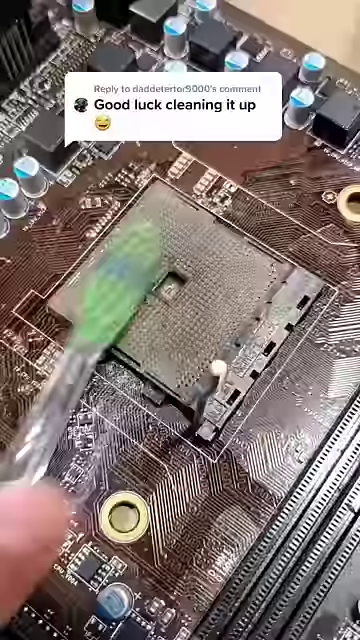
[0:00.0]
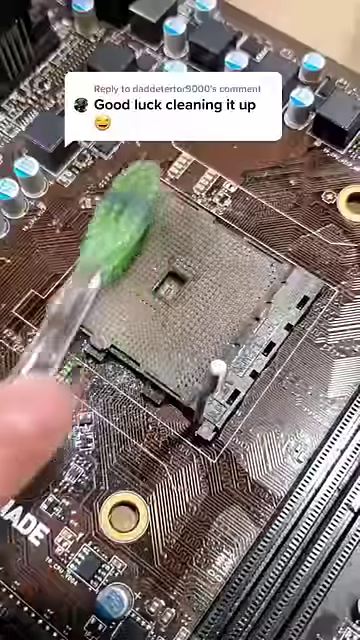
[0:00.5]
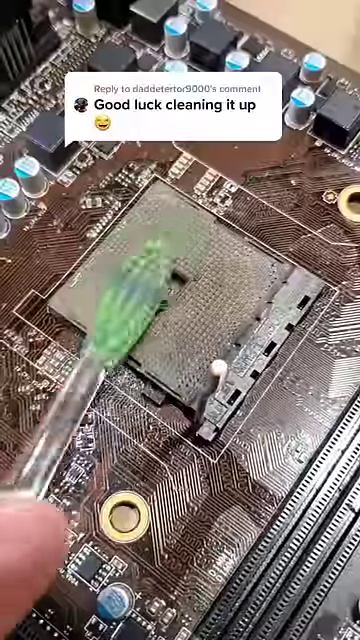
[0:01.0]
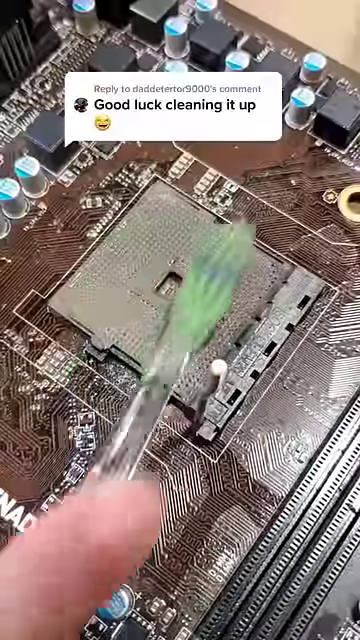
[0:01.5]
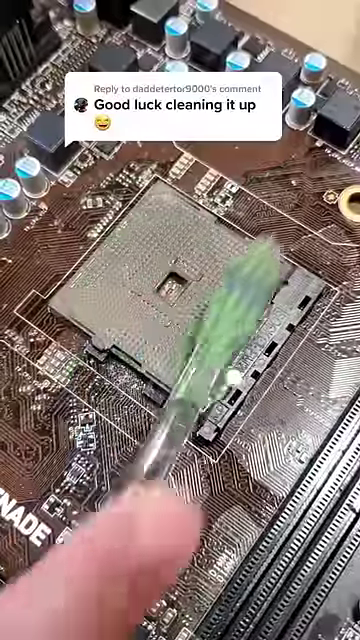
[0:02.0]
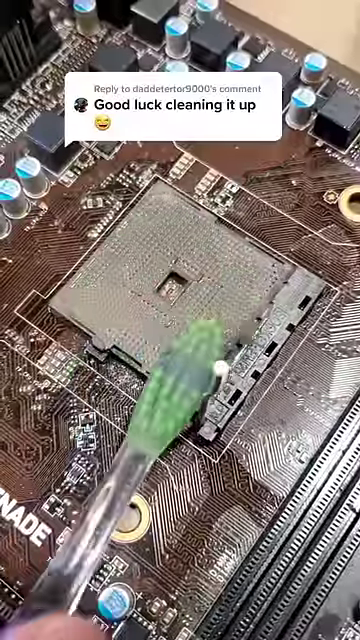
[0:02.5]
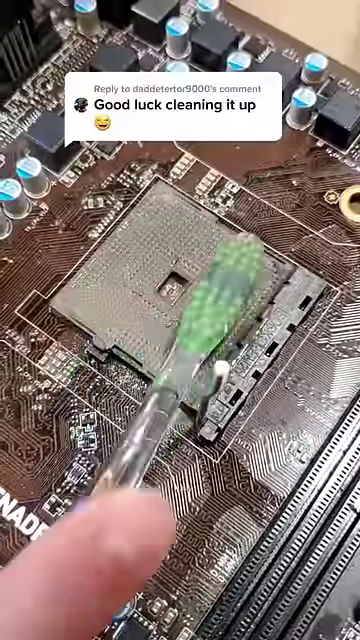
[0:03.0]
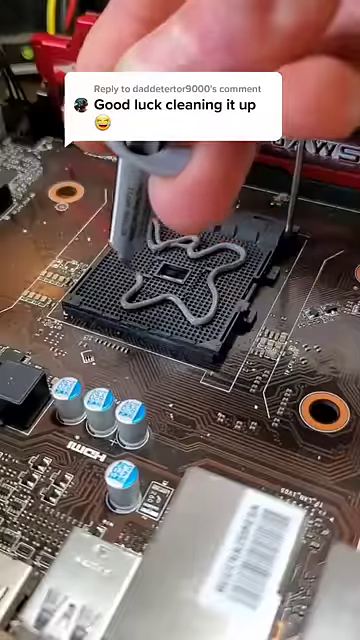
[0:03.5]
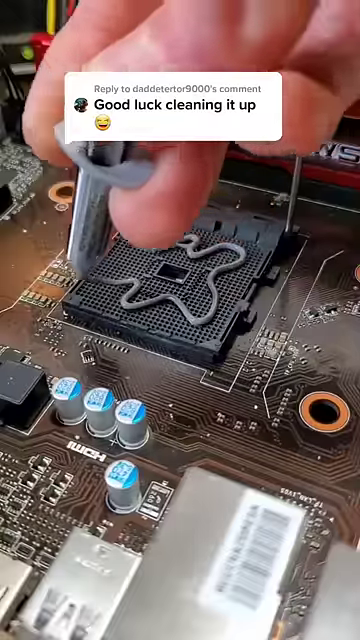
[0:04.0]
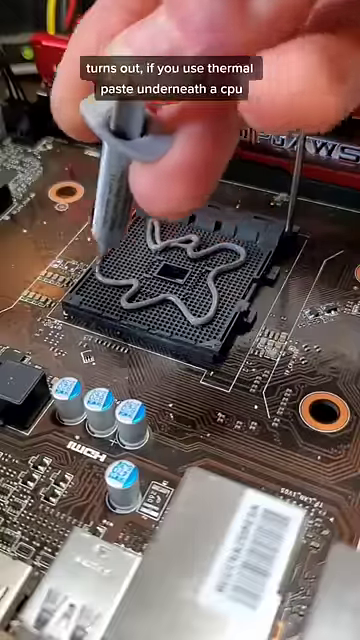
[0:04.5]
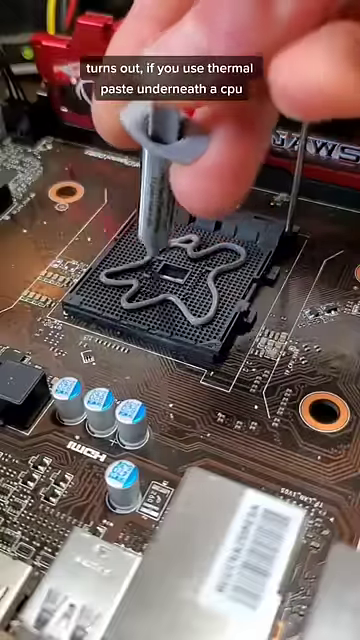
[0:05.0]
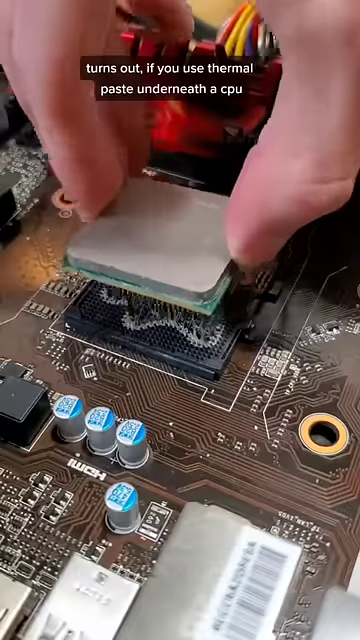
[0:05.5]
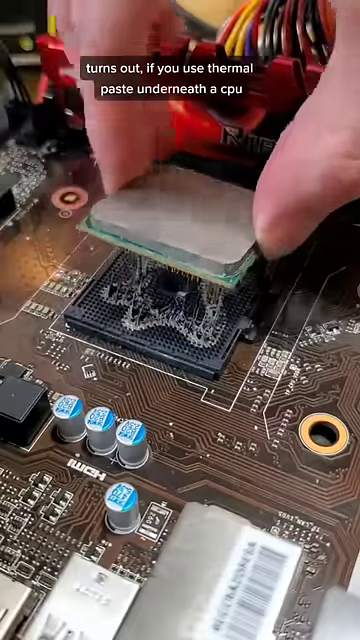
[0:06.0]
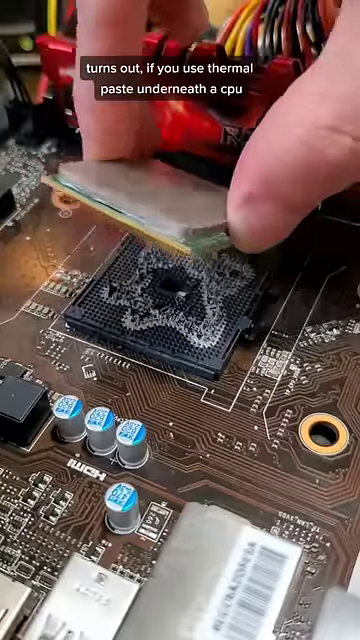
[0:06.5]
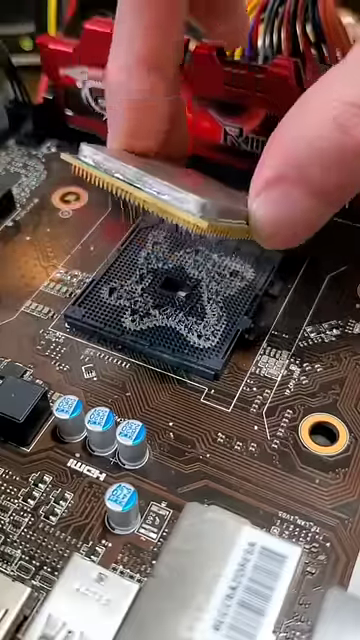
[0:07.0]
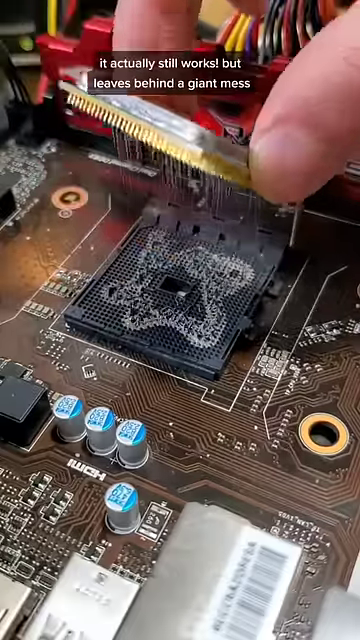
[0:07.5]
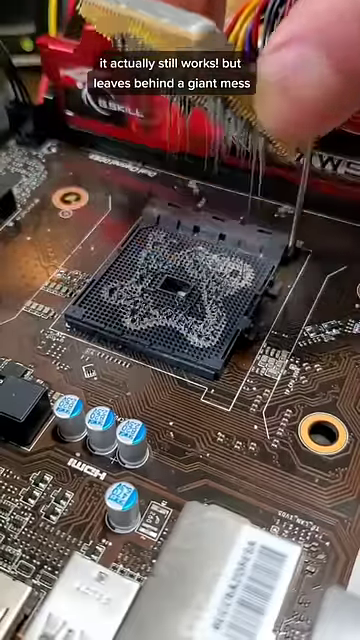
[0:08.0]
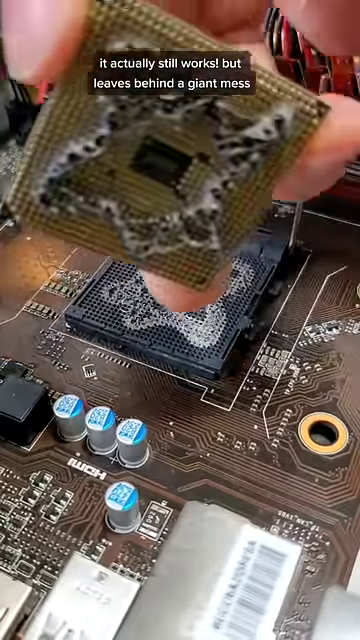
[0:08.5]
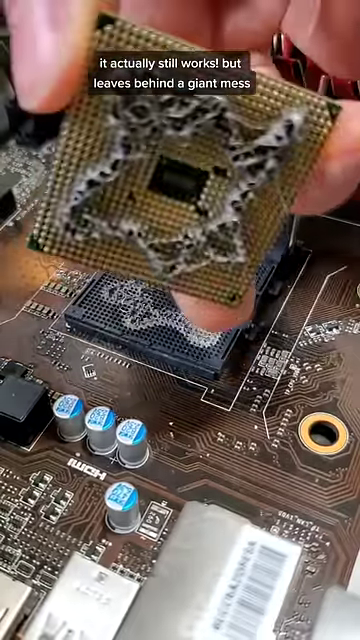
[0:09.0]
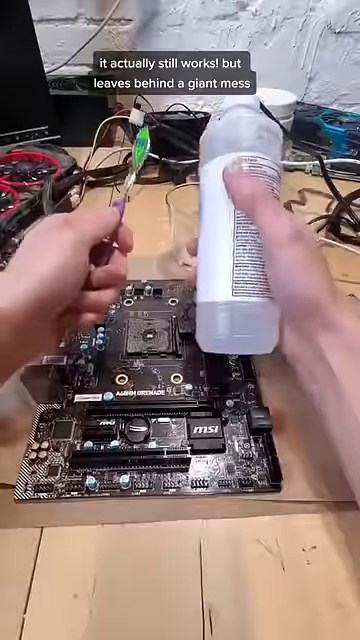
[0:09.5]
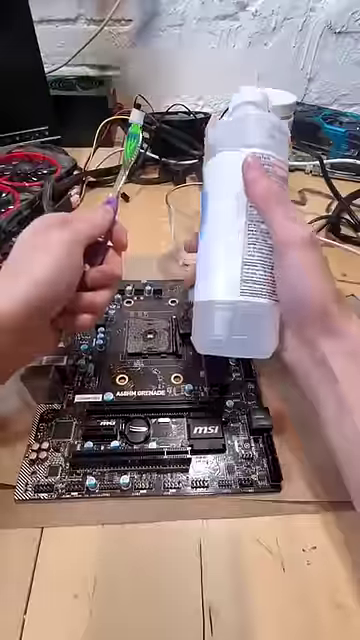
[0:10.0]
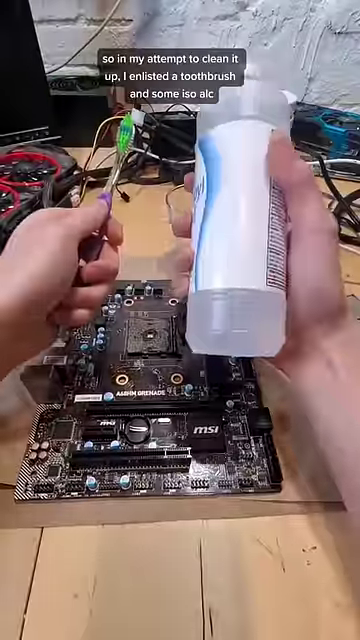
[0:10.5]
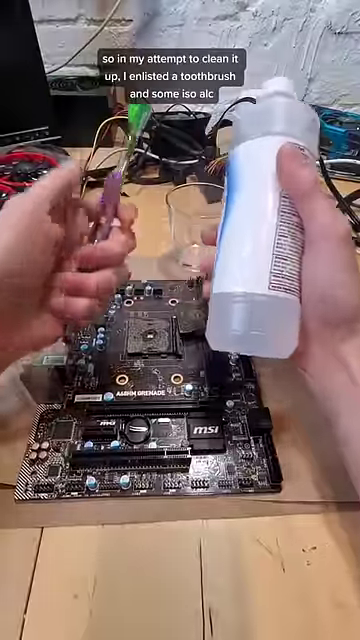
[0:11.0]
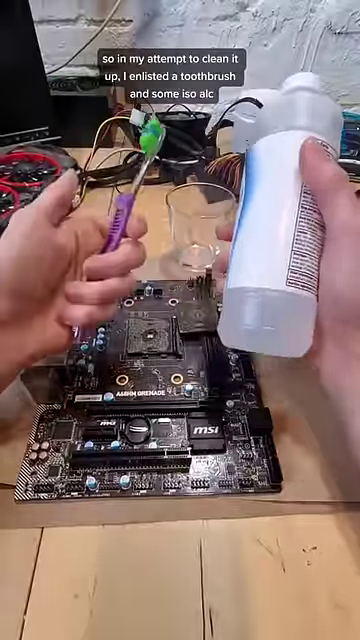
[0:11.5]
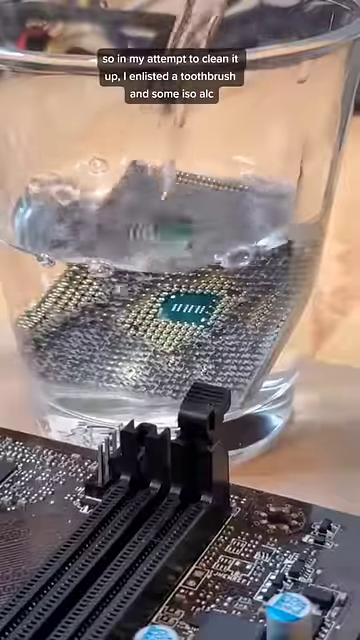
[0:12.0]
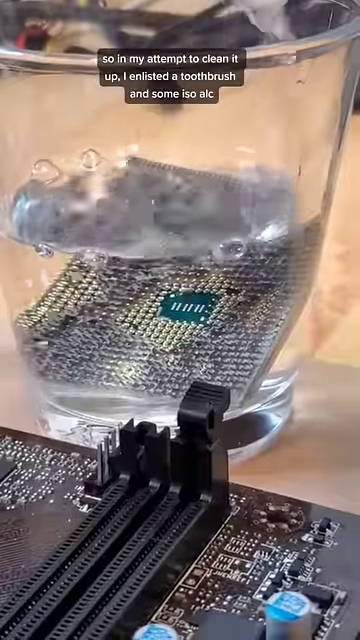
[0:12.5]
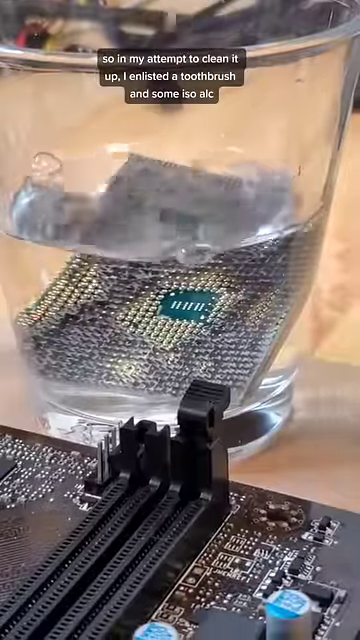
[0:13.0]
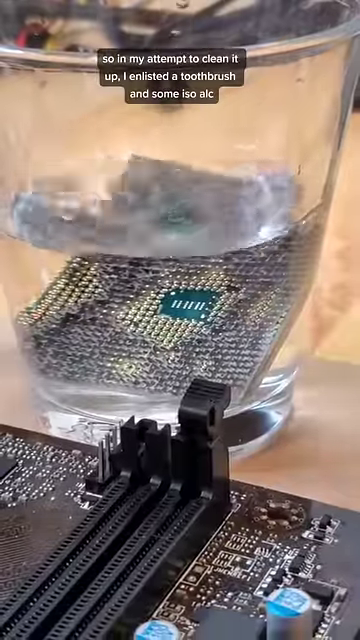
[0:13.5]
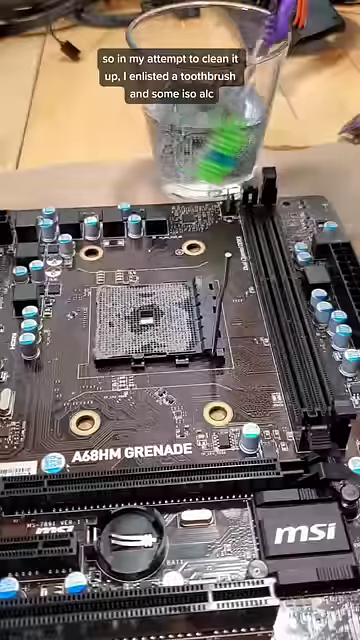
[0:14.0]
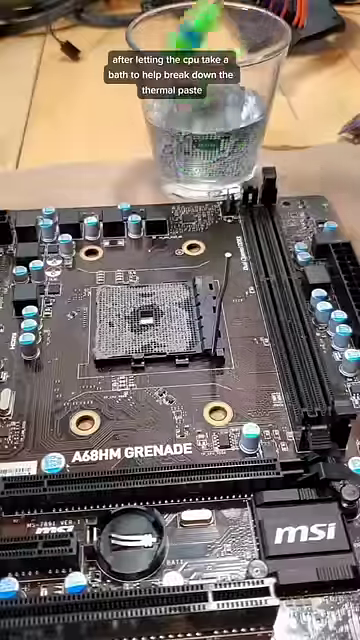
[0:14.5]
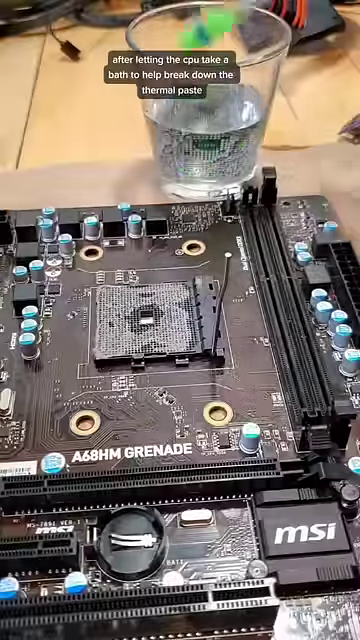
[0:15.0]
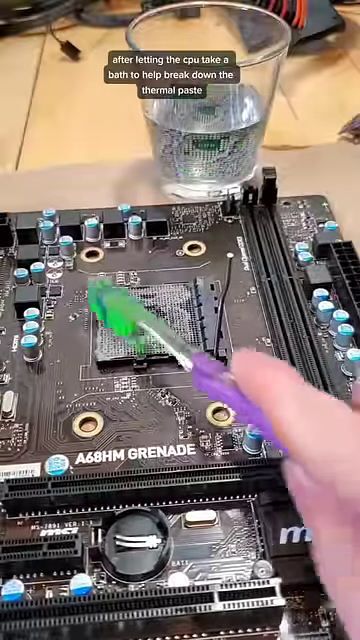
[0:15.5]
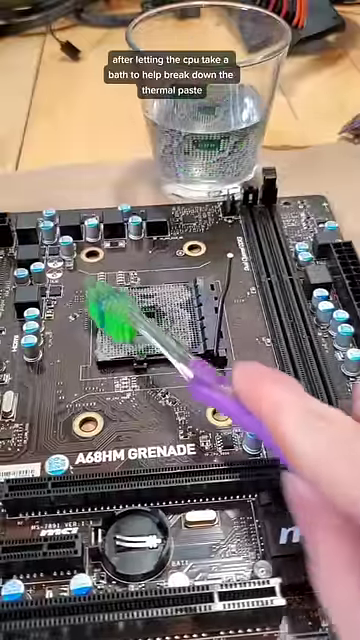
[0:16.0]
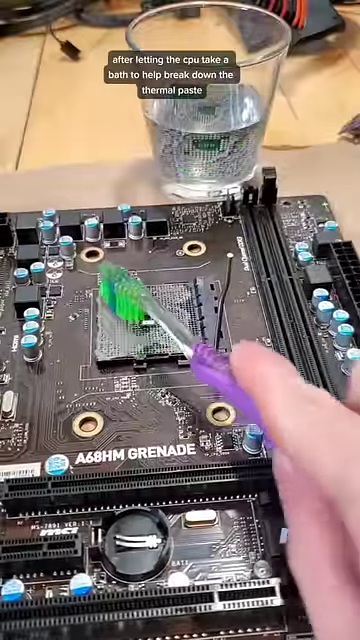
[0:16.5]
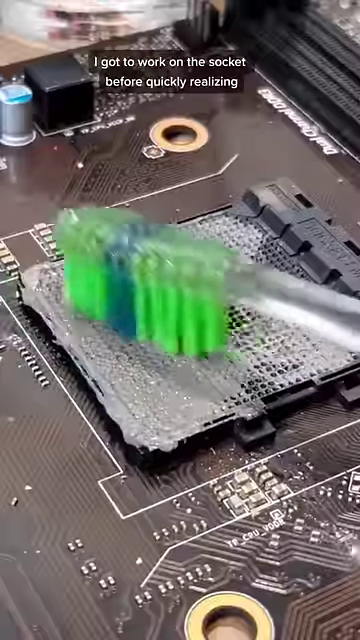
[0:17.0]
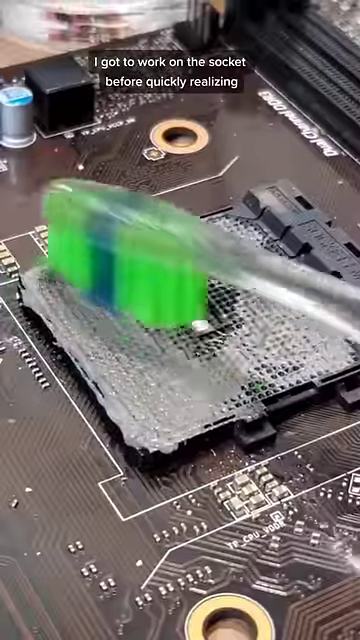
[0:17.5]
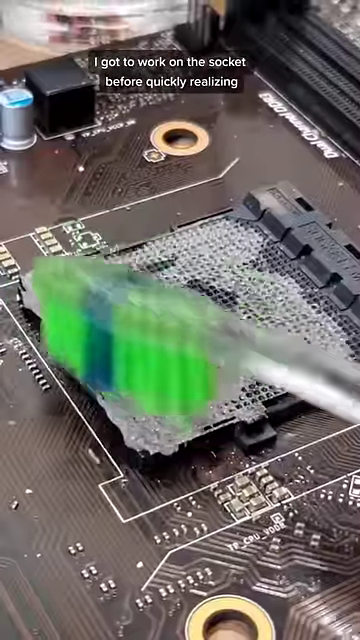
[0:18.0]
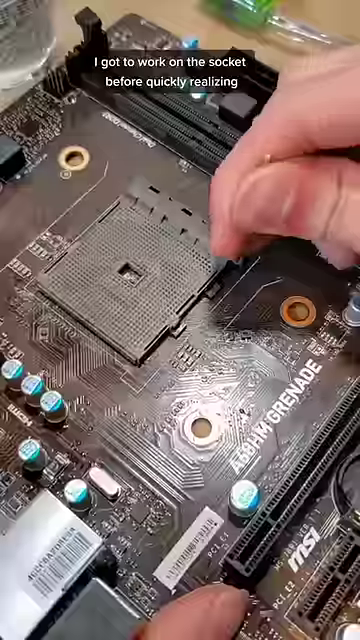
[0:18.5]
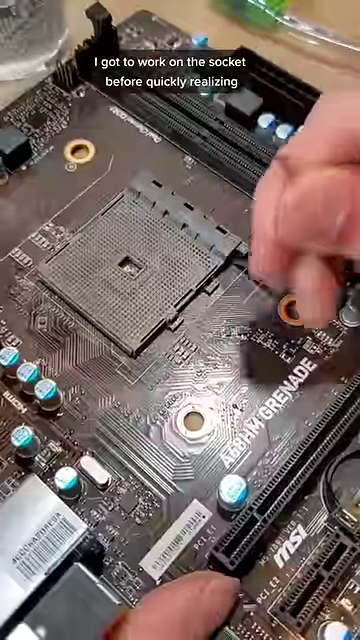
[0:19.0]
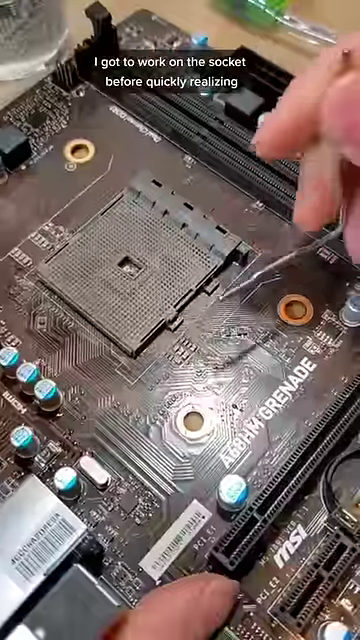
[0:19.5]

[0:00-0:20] A how-to video shows a person removing thermal paste from an improperly installed CPU. Thermal paste is on the underside of the area where the CPU goes and has gotten in among the CPU's pegs. The person lifts off the CPU and puts it into a glass of liquid, then uses a toothbrush with the liquid to scrape against the CPU socket on the motherboard to try to get rid of the thermal paste. Text over the top refers to what is being done and to messages people have posted about it.